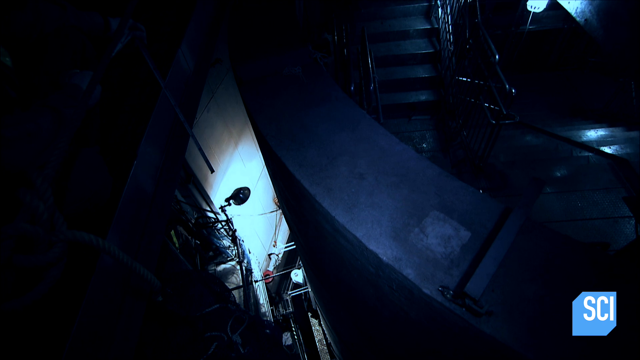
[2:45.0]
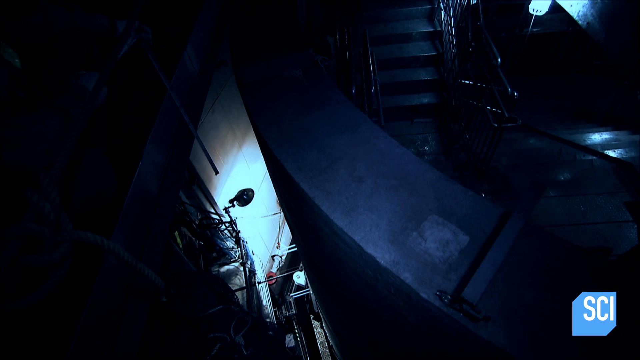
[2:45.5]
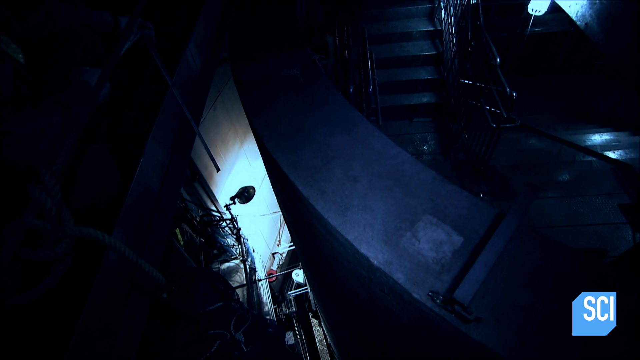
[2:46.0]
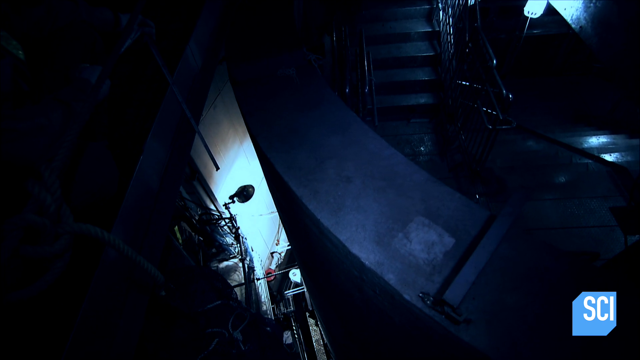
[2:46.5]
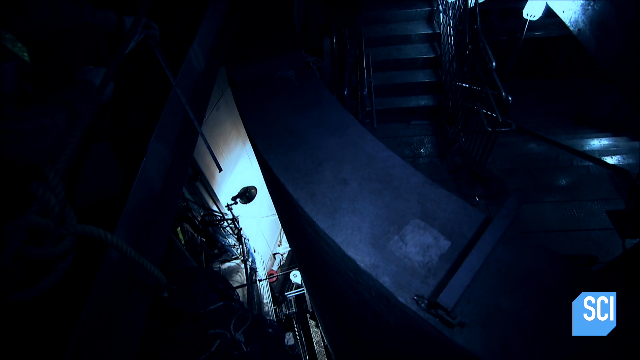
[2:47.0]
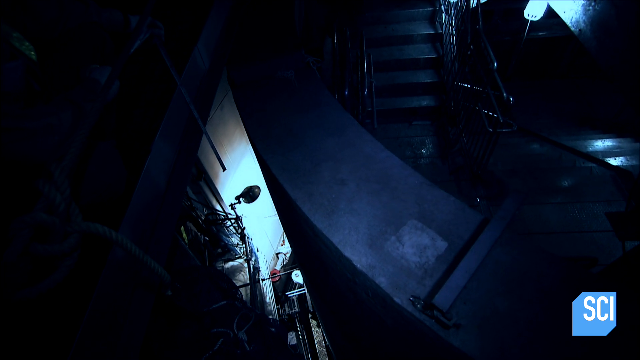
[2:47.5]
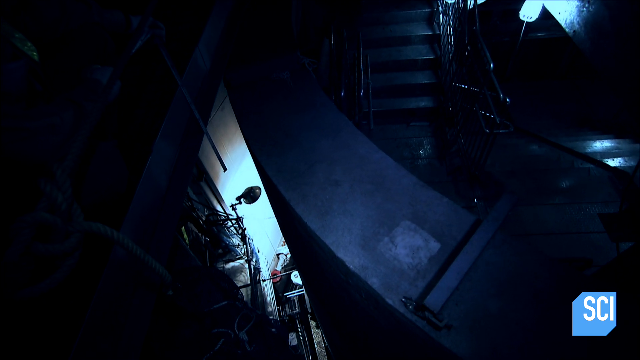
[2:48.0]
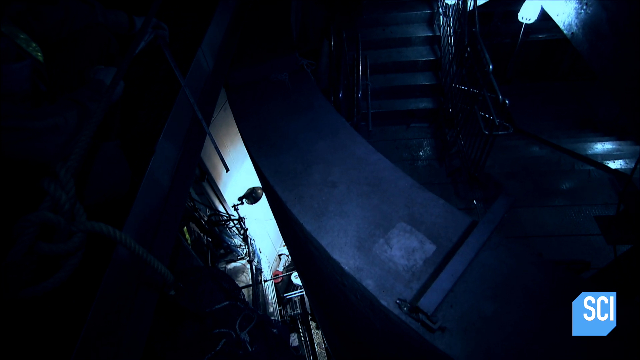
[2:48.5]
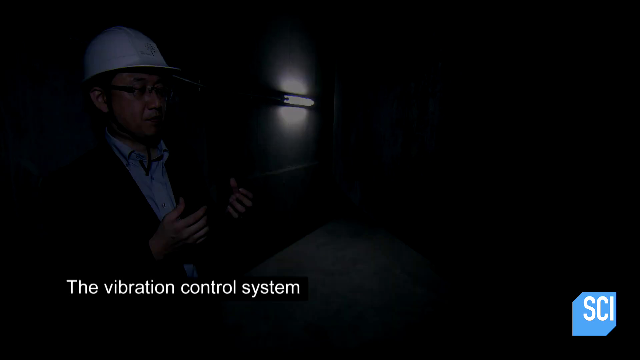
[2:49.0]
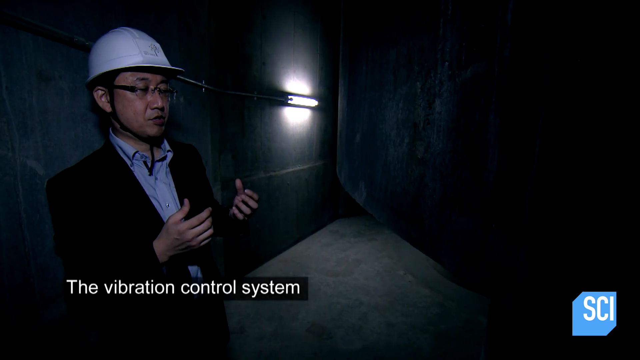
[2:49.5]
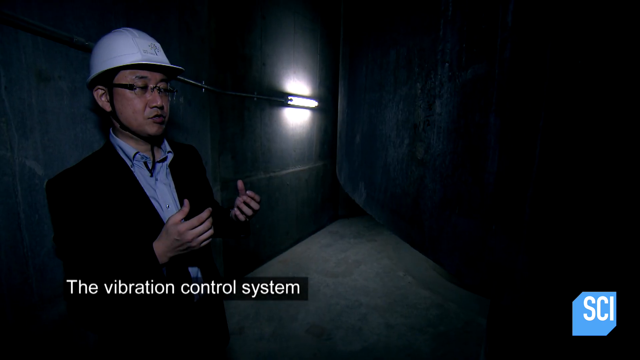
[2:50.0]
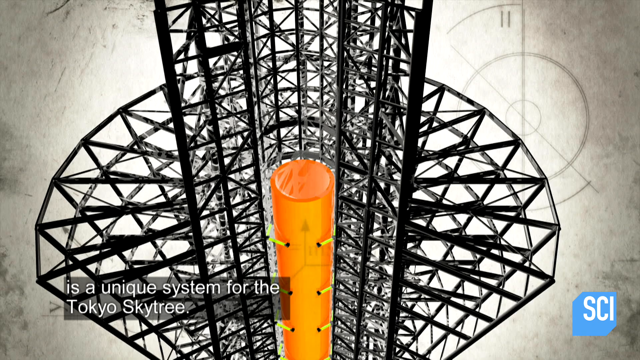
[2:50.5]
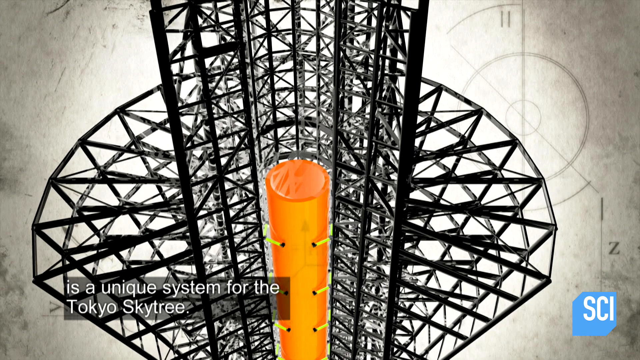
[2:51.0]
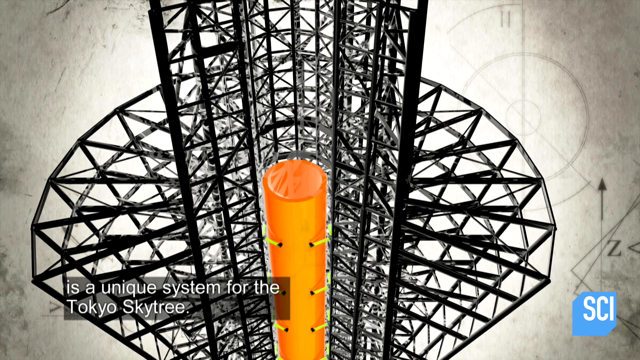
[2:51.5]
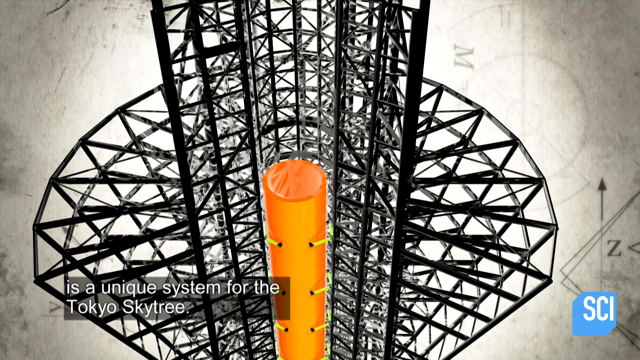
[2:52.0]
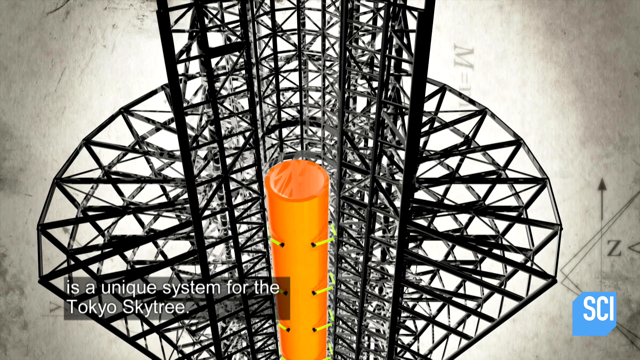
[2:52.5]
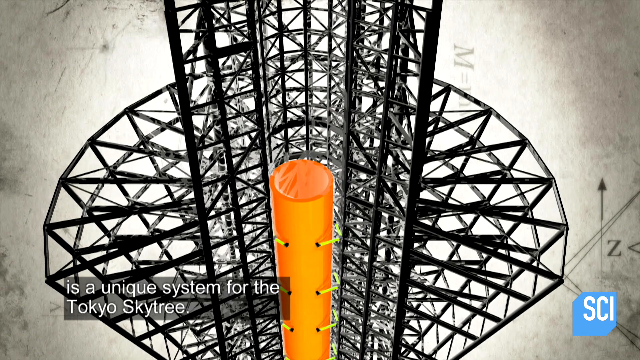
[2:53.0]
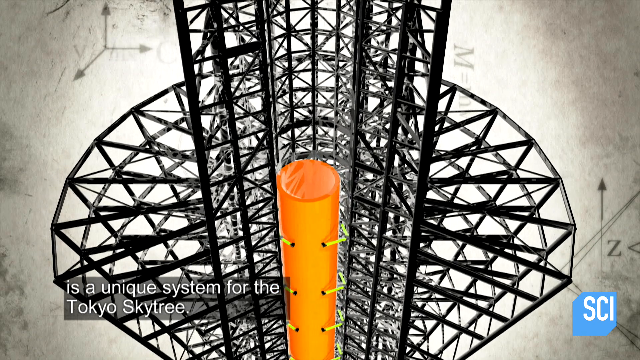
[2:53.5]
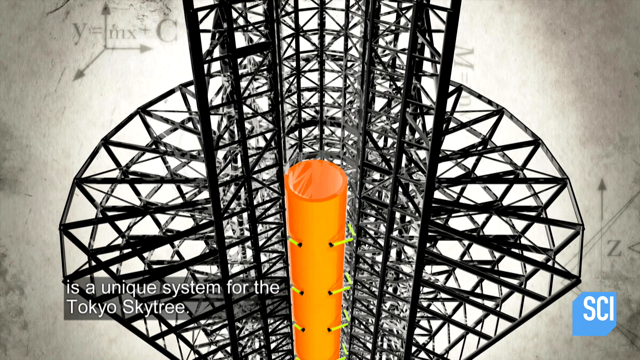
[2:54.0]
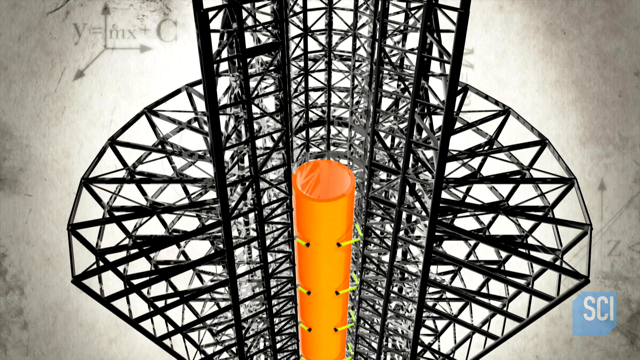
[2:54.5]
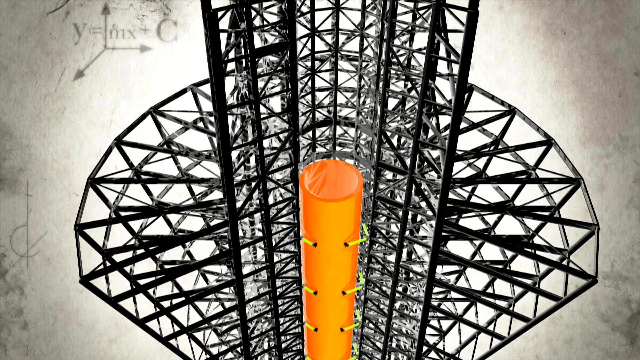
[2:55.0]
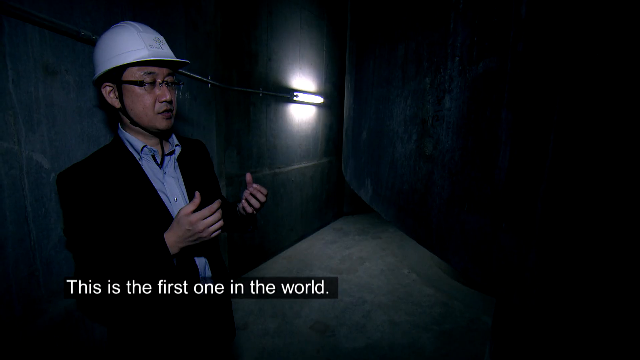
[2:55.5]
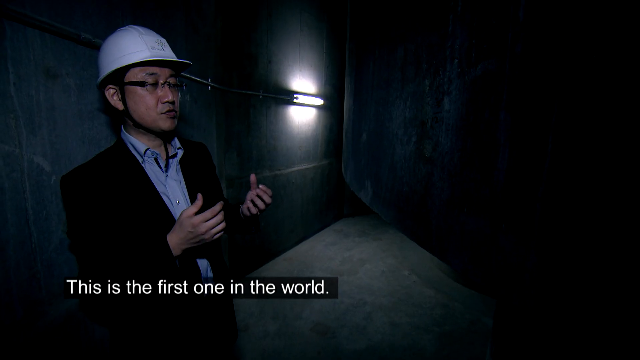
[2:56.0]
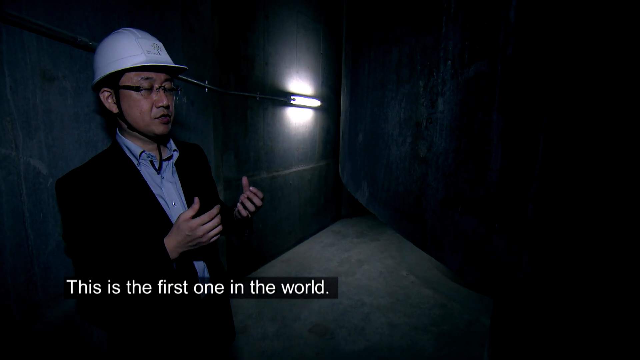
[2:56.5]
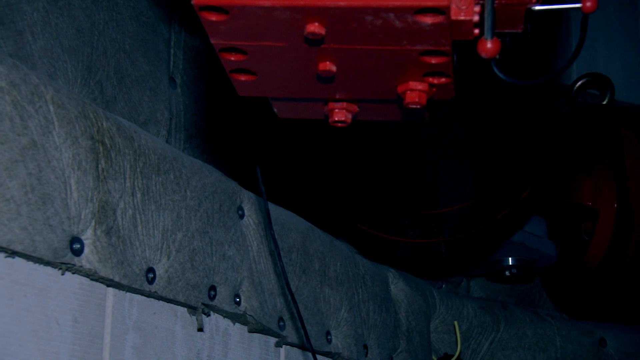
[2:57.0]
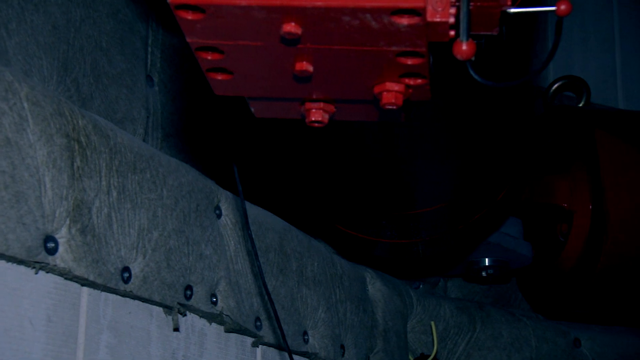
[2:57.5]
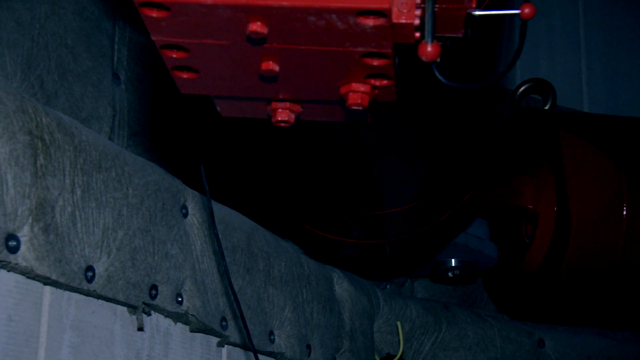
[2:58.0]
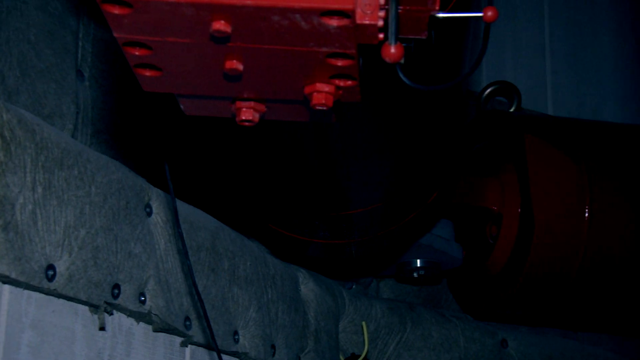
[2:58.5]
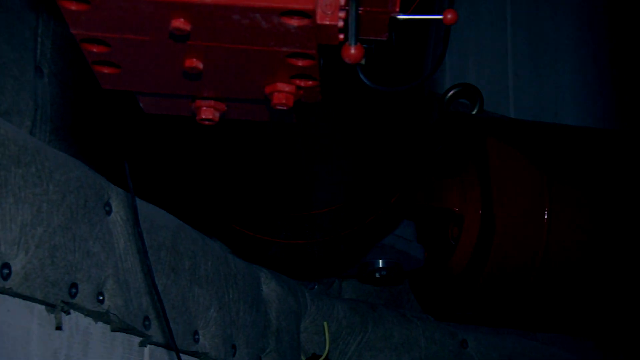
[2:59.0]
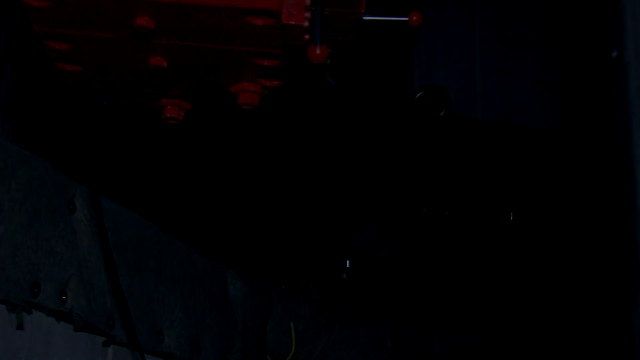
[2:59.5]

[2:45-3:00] The inside of the Skytree is shown, including its center, while the engineer appears.